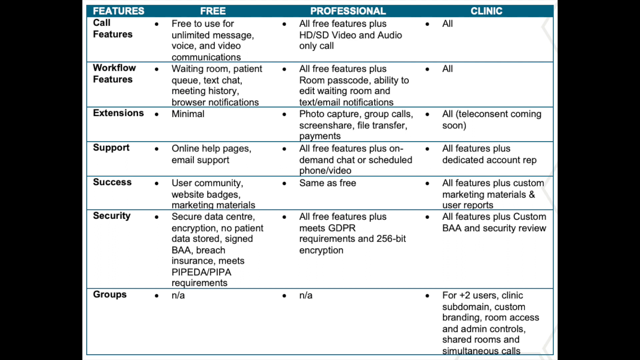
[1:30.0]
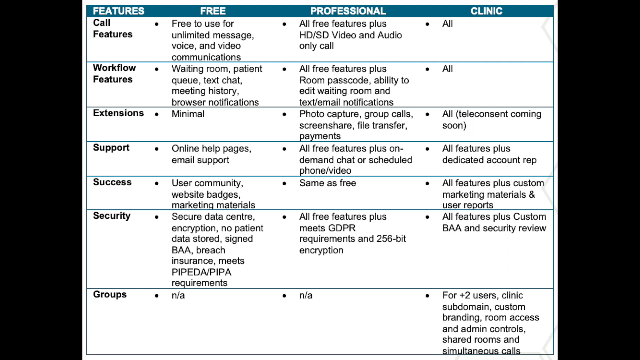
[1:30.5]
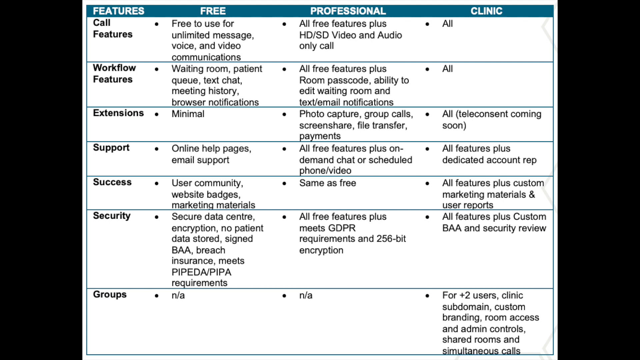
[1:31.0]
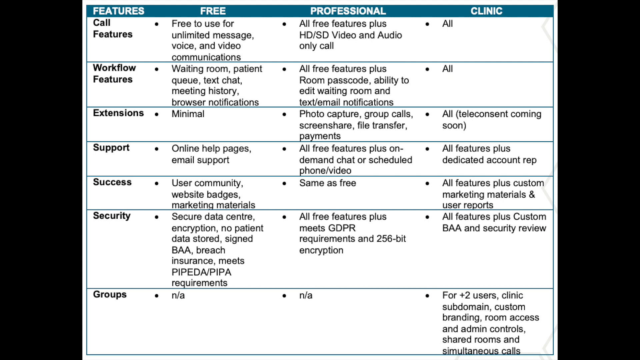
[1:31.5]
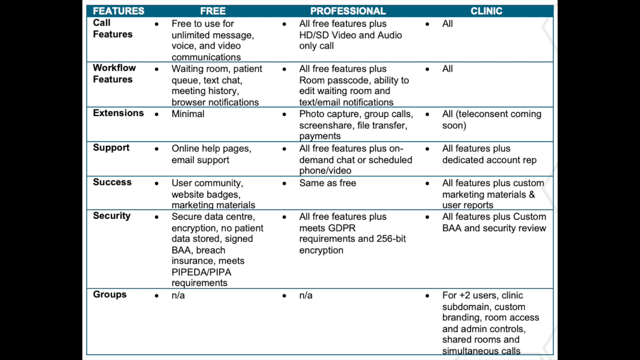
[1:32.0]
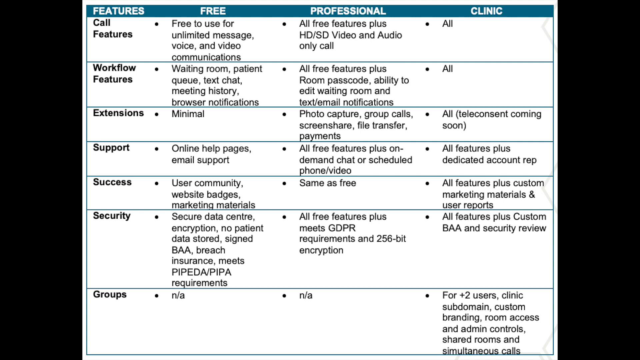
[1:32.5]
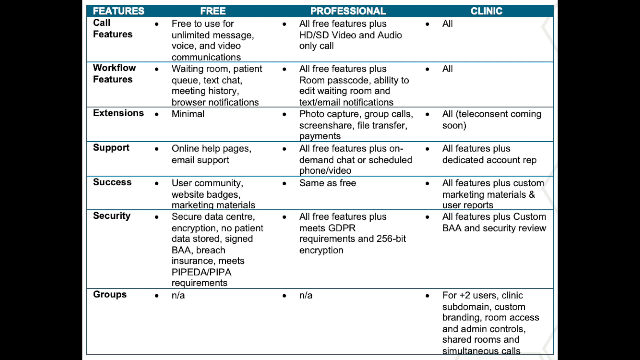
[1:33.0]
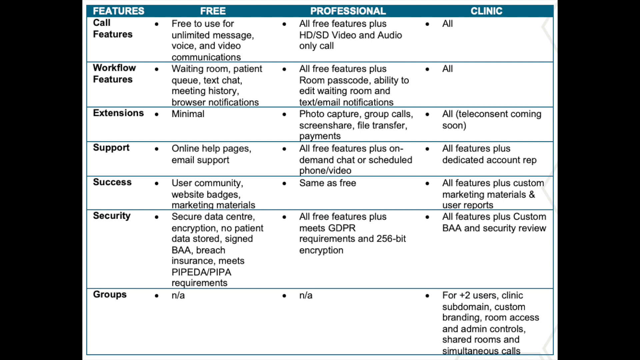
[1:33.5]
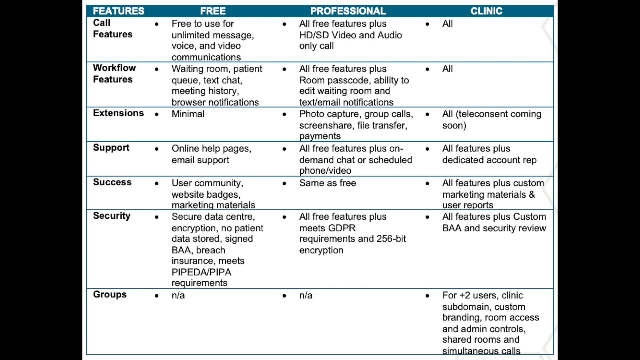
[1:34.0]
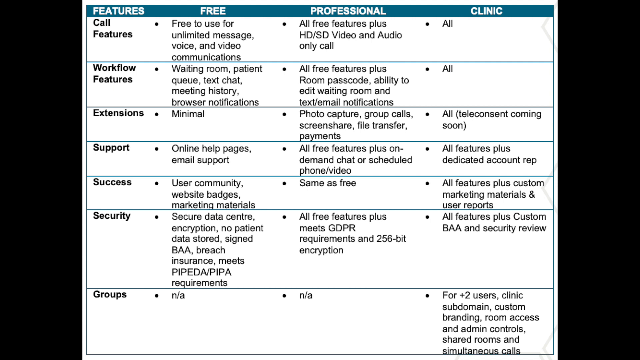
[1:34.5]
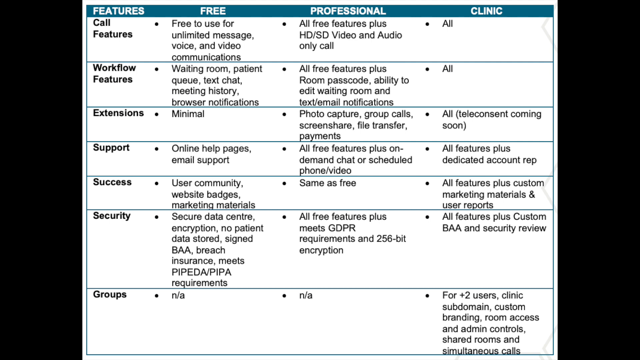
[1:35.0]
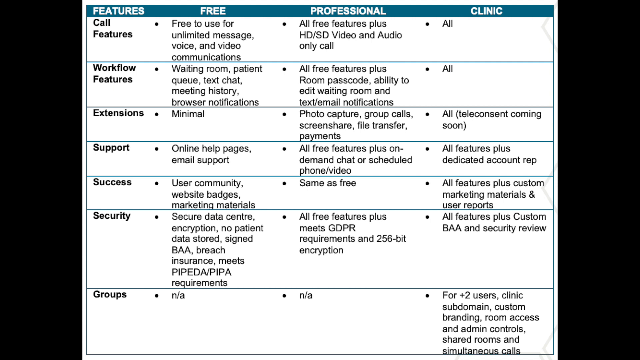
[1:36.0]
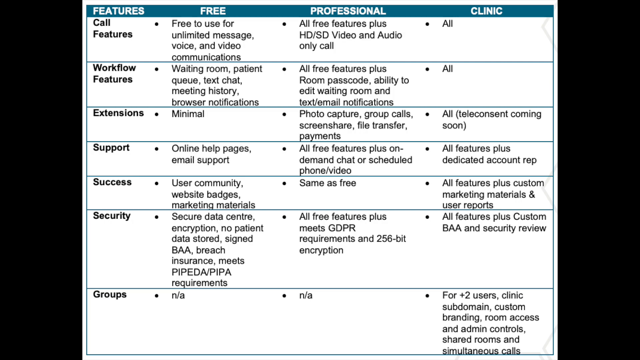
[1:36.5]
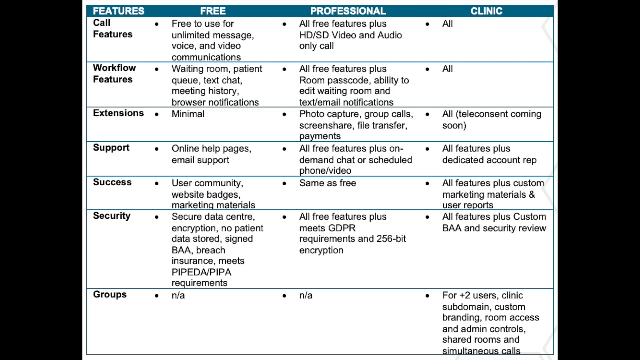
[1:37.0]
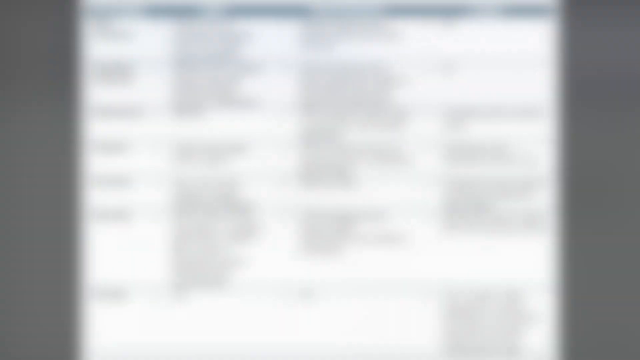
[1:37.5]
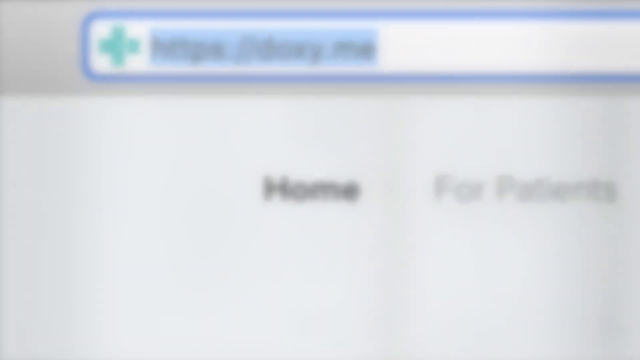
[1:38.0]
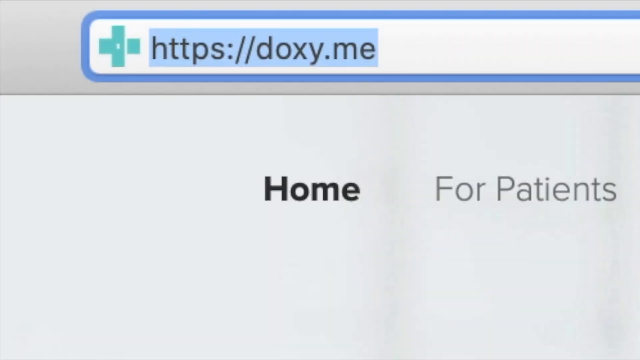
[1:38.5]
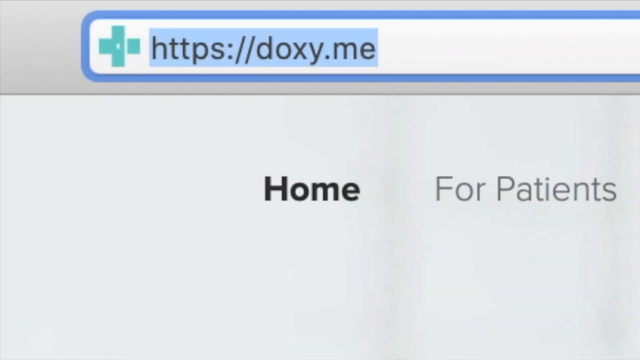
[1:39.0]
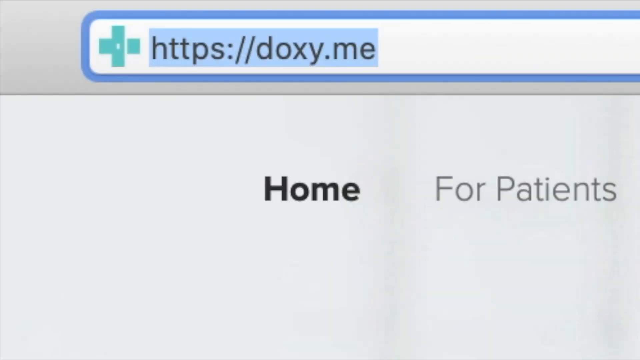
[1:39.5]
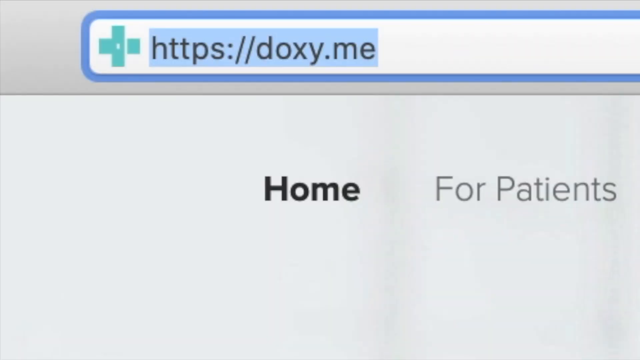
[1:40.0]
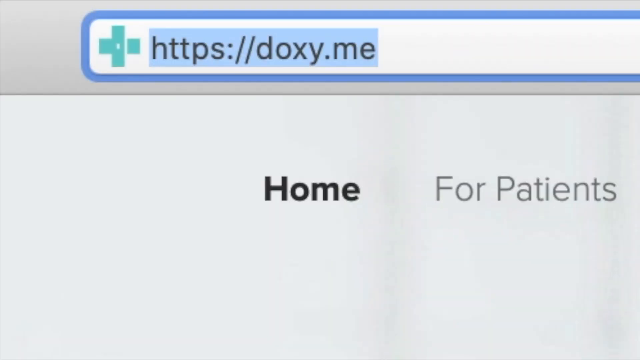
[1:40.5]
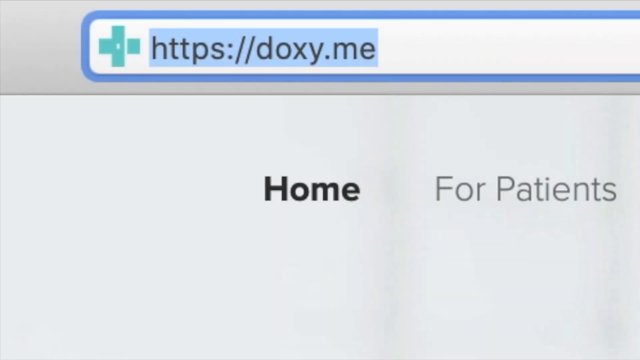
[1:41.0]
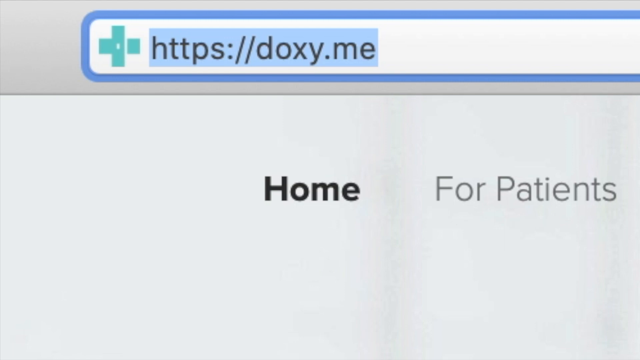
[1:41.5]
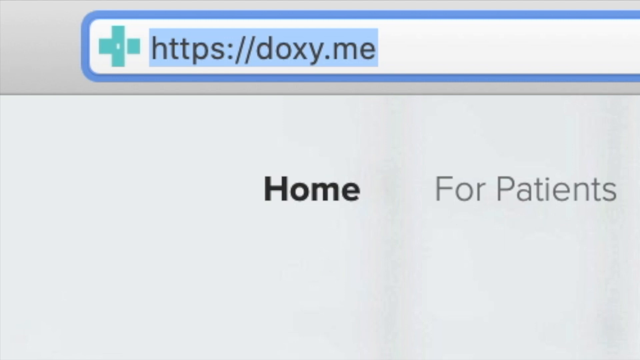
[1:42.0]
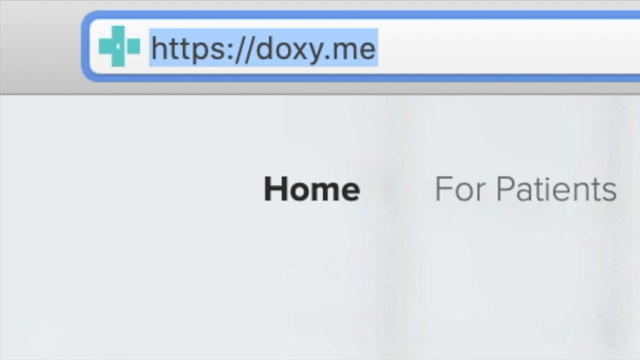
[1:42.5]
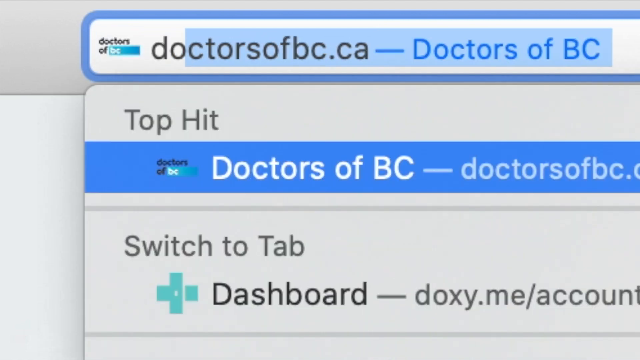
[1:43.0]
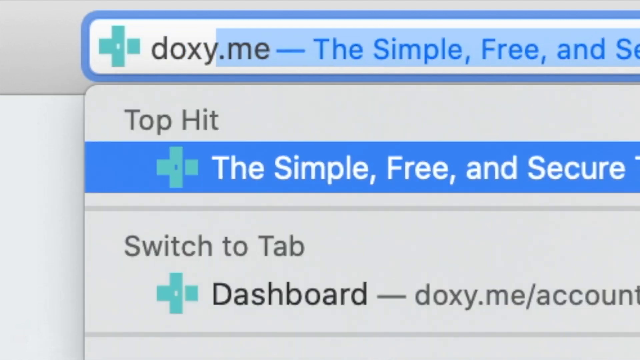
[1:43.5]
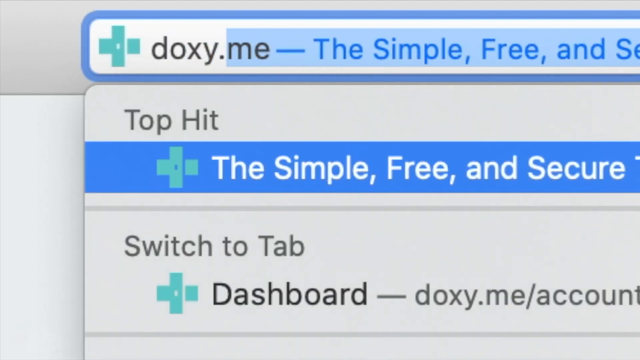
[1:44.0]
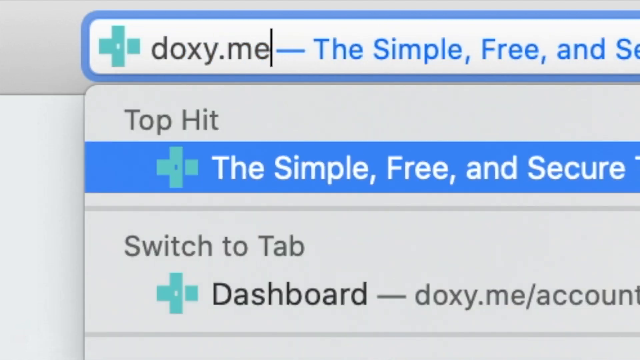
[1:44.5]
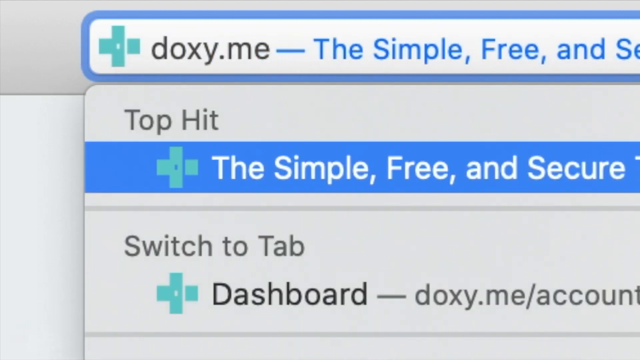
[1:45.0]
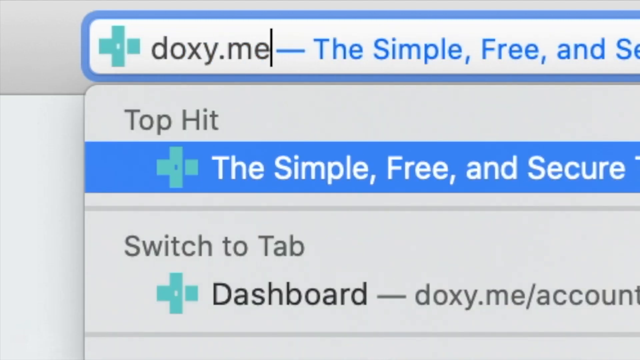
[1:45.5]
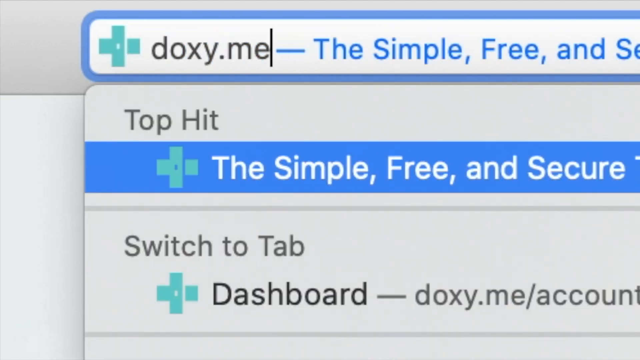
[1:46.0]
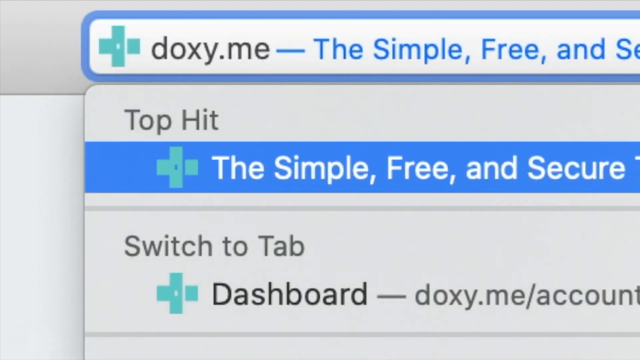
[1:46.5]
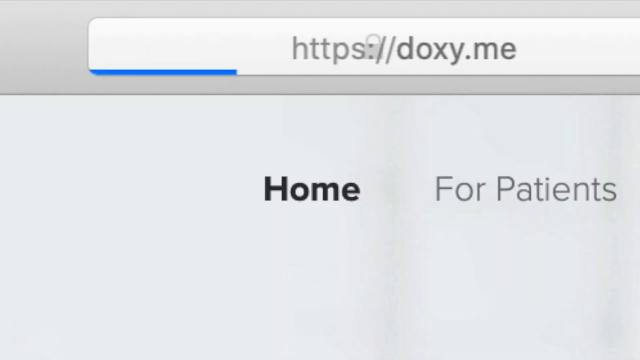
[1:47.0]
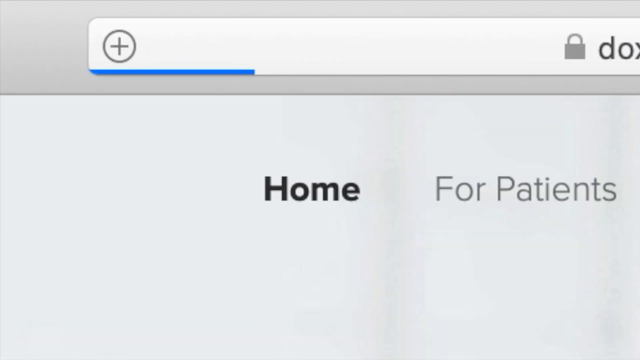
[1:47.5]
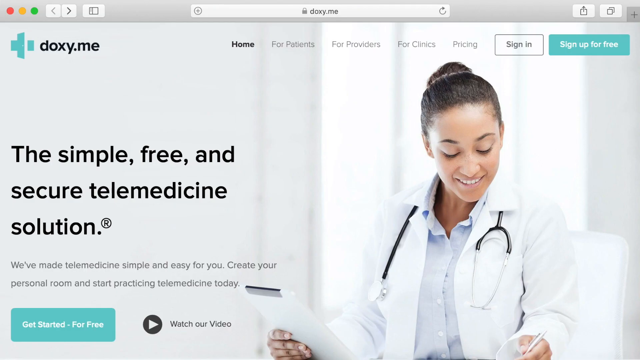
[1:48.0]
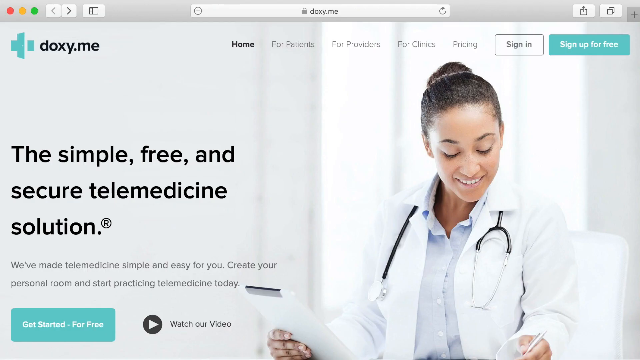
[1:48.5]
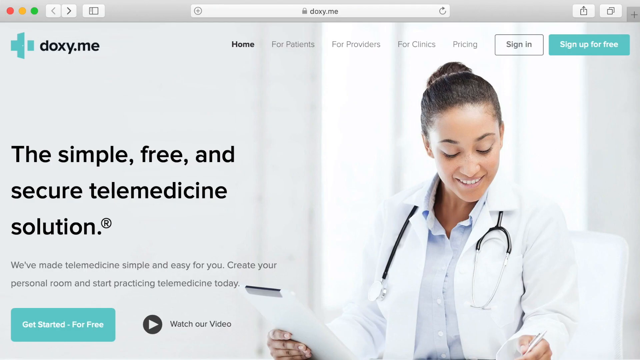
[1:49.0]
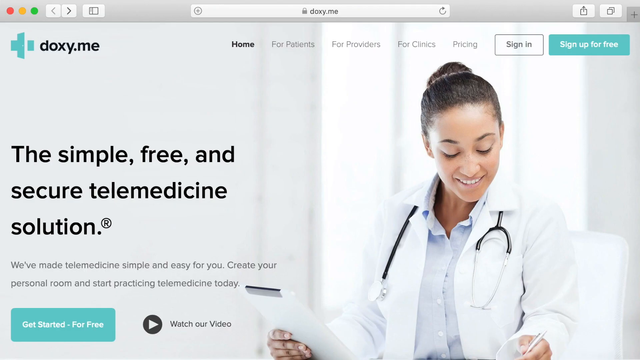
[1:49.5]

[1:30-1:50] The membership choices for doxy.me are shown. Then the website URL appears: "https://doxy.me." A homepage for patients follows, with "doxy.me" at the top left corner. Next is the doxy.me web page with tabs running across the top right of the screen, a female doctor in a white physician's coat, and text on the left center of the screen reading "a simple, free, and secure telemedicine solution." Then the membership choices appear, free, professional, and clinic, along with their features: call features, workflow features, extensions, support, success, and security.